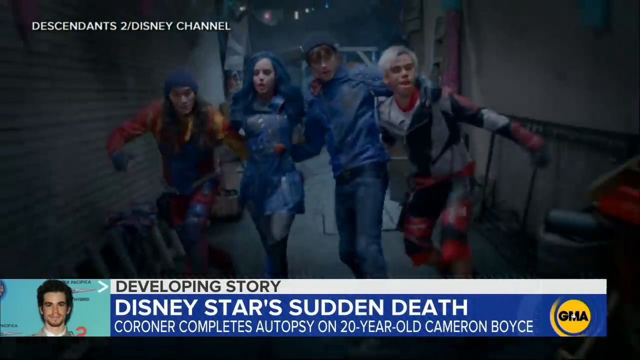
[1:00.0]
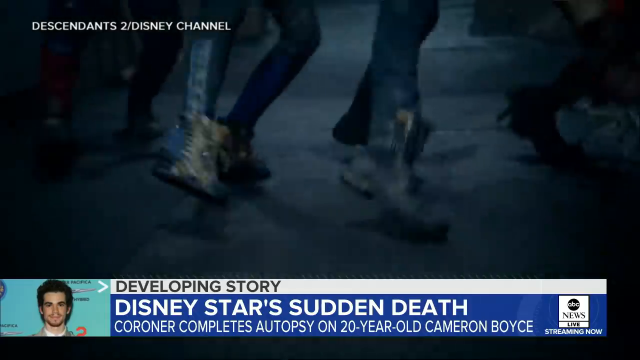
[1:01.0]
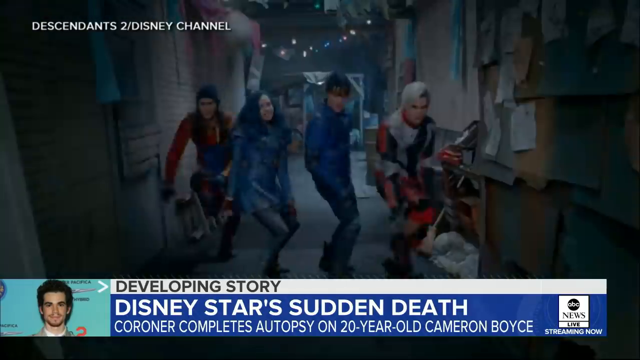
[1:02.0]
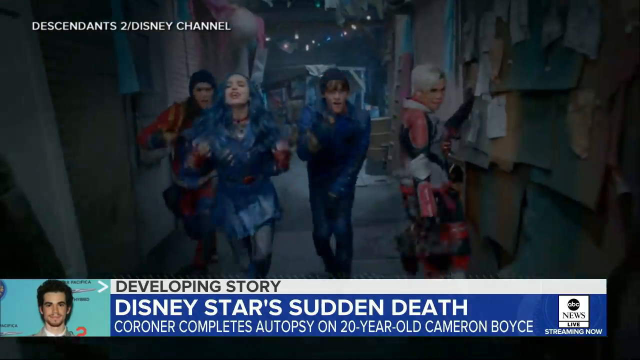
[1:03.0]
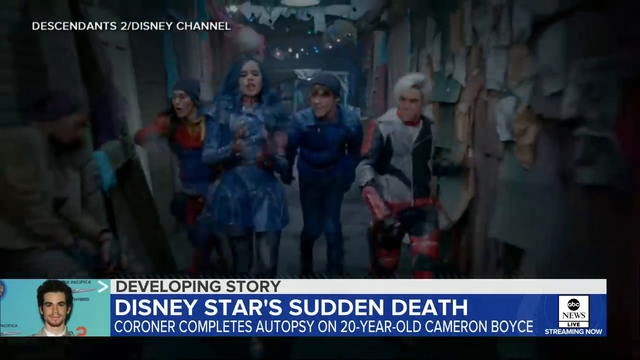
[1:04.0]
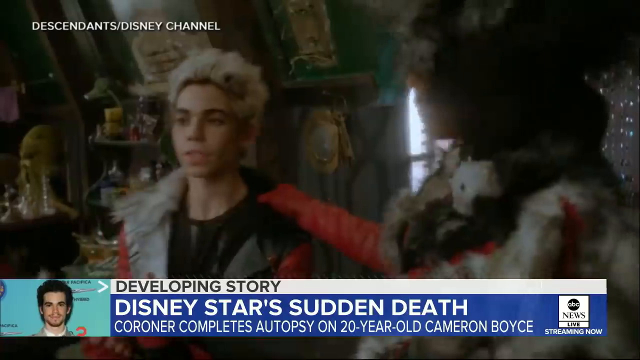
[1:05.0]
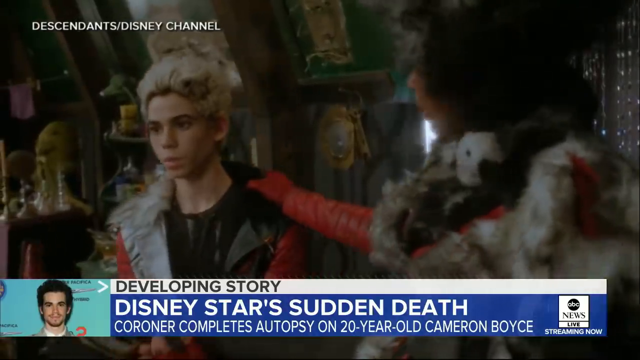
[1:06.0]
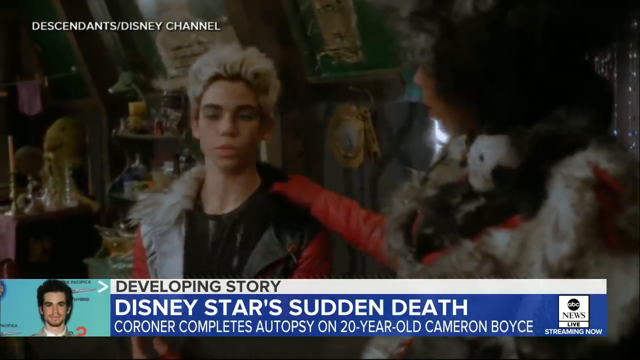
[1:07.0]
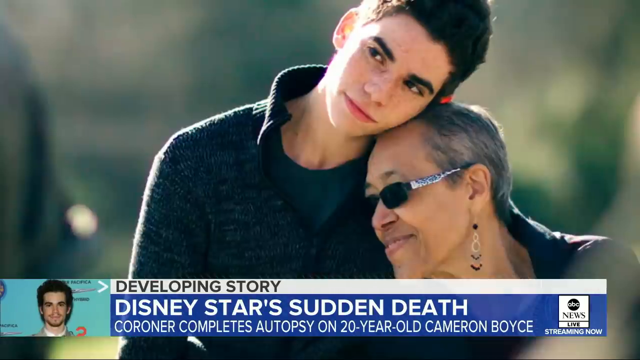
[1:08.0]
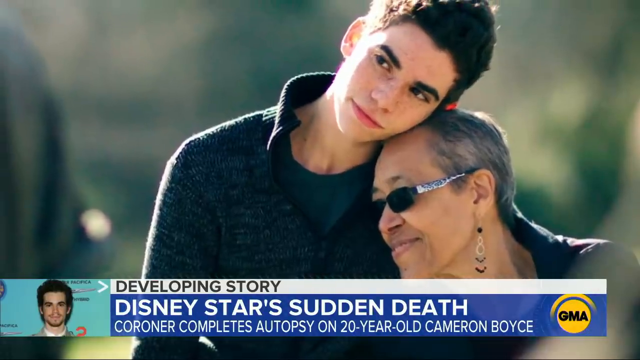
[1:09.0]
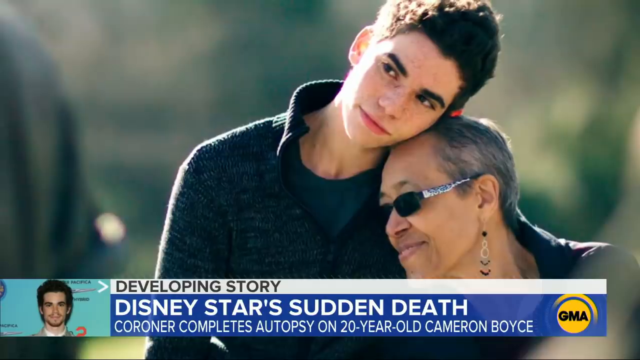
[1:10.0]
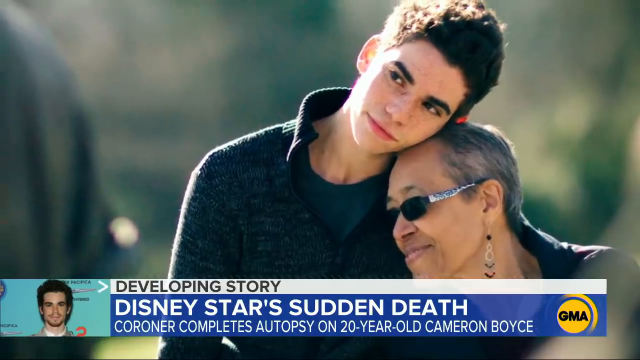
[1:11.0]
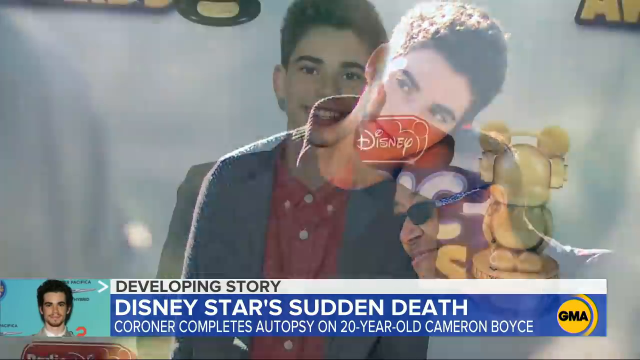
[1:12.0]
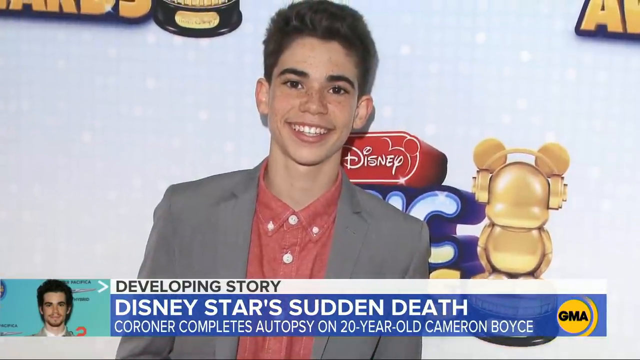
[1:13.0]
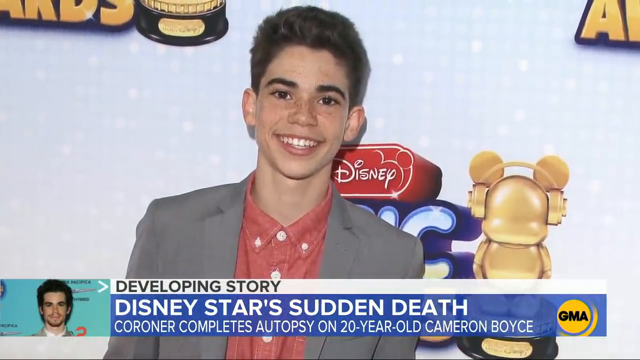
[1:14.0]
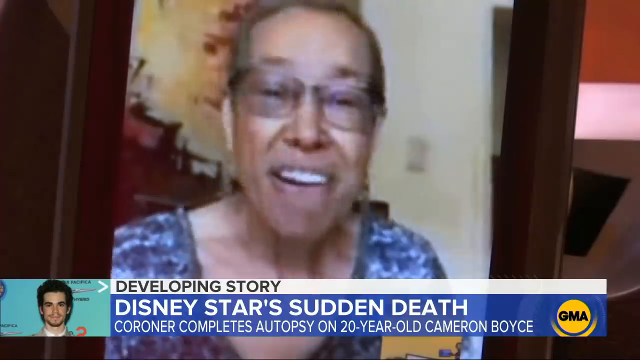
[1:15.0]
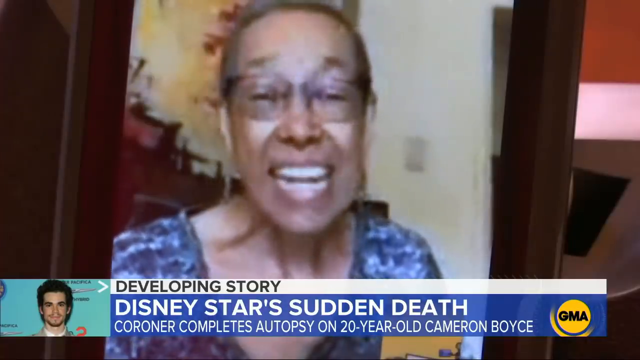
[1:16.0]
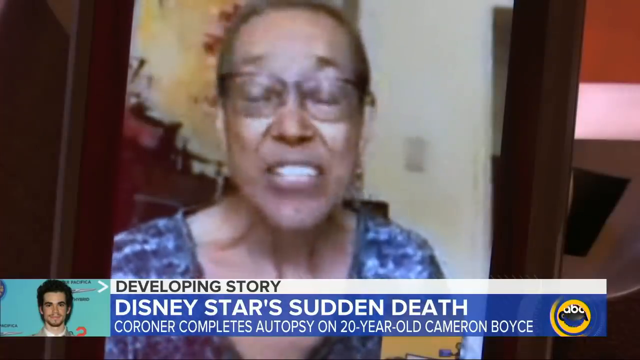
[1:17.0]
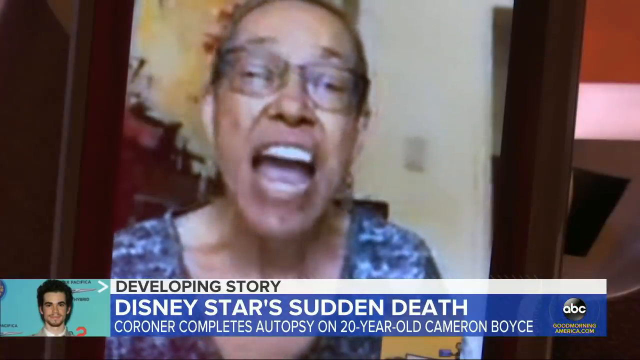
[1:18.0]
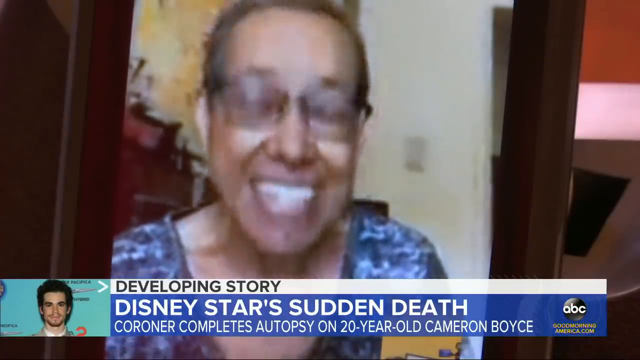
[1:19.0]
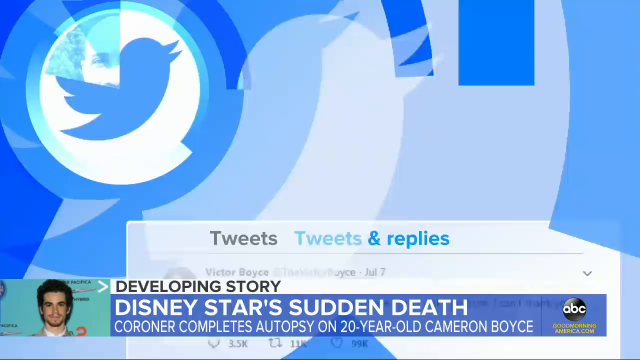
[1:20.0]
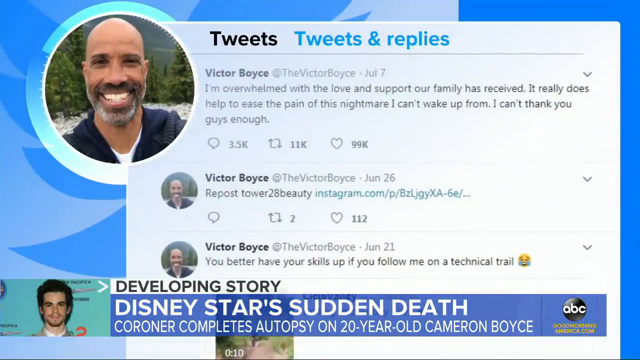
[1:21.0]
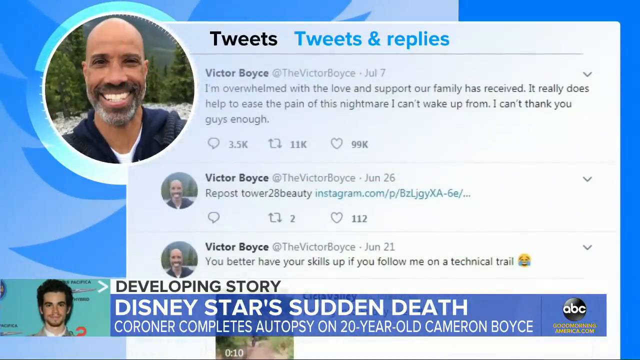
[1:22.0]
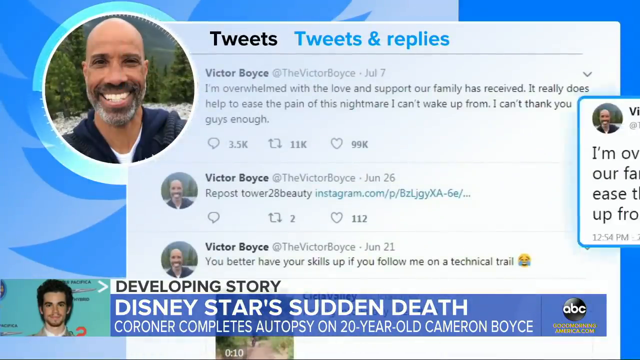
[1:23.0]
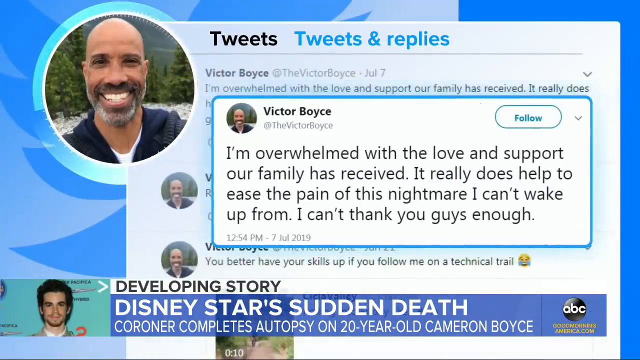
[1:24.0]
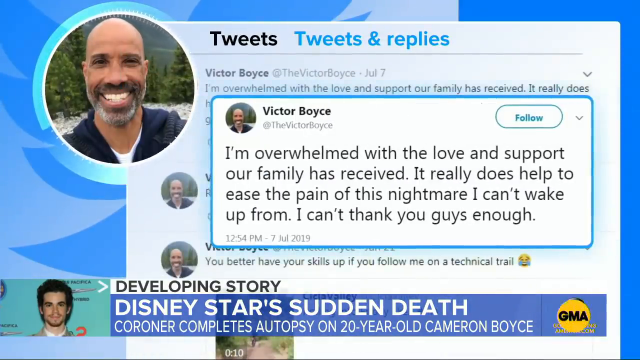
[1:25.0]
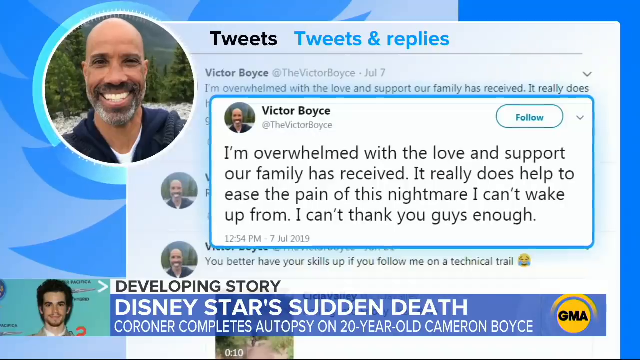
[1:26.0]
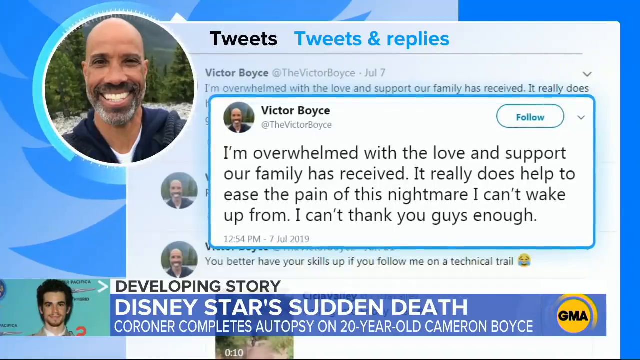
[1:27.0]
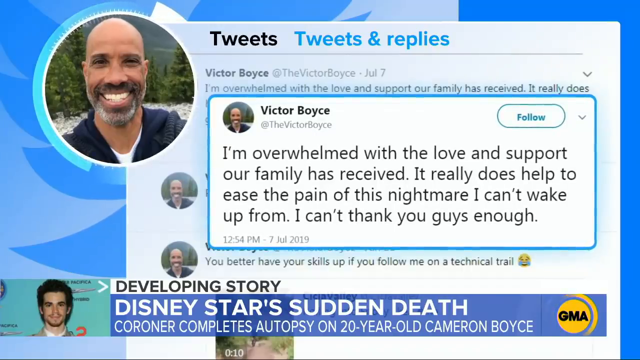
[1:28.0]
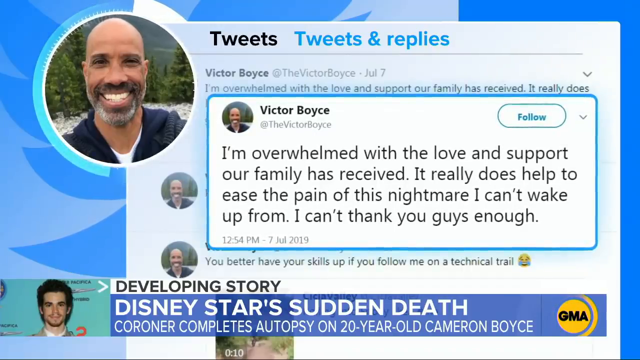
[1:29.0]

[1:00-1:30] In the movie scene, the four people have their arms around each other's shoulders as they walk in a very animated way. Cameron Boyce seems to be the one on the right, with white-silver hair, wearing a gray shirt with red and black details and black and red pants of an almost leather-like material. The other three wear blue and black, and the guy on the left wears red, blue and yellow with a beanie. They almost start to dance instead of walking, moving together in a similar fashion in a very dramatic, animated way with flair. The next shot shows Cameron Boyce as this character in a different scene, standing with a woman with a big afro who holds his left shoulder with her right hand. She lifts her leg and he catches it with both arms. She seems to be similarly dressed, with white and black fur and red leather gloves. She speaks to him and he responds. The next shot shows Cameron Boyce as himself, seemingly sitting outside with the sun shining on the right side of his face. He wears a black half-zip sweater and leans his head to the left on someone who wears glasses and seems to be smiling. The next shot shows him against a Disney backdrop in a gray blazer and a red button-up shirt, smiling open-mouthed at the camera. Next, the same woman from the sunny photo speaks in a video recording; she has glasses, wears a blue and black shirt or blouse, and speaks animatedly to the camera. The next shot shows a Twitter feed against a blue background. At the top left is a magnified circle with the face of someone named Victor Boyce, and the panel on the right shows tweets and replies, including multiple tweets from Victor Boyce, who seems to be Cameron Boyce's father. The feed is then magnified with an overlay of the first tweet, which reads: "I'm overwhelmed with the love and support our family has received. It really does help to ease the pain of this nightmare I can't wake up from. I can't thank you guys enough."